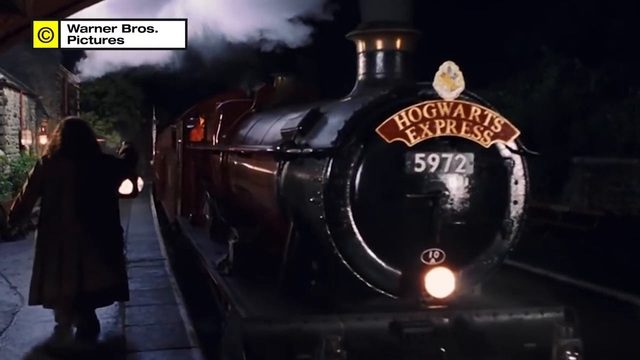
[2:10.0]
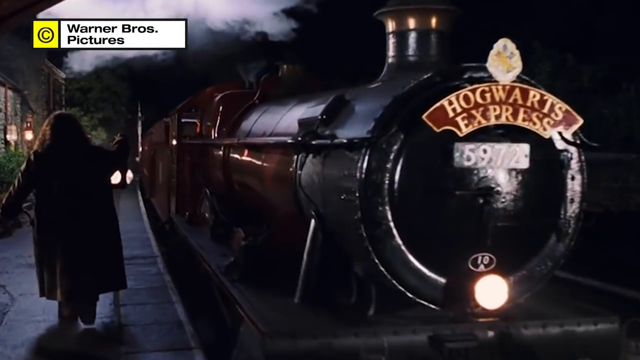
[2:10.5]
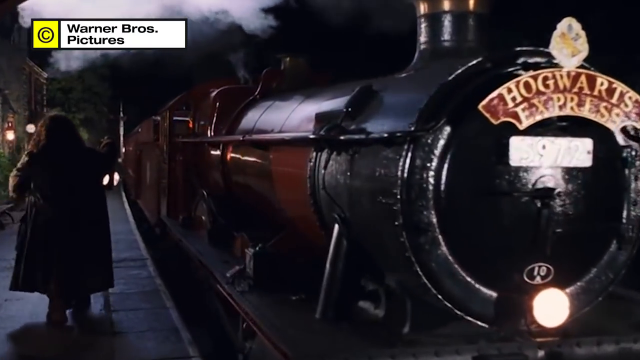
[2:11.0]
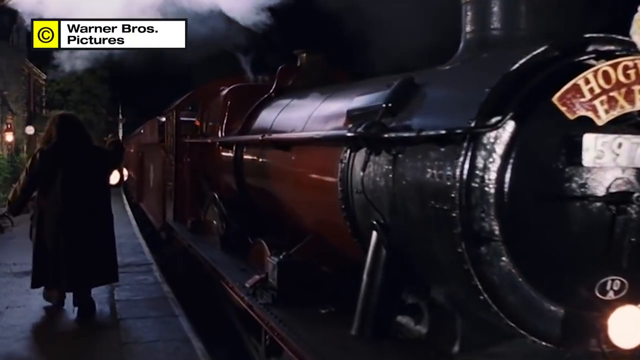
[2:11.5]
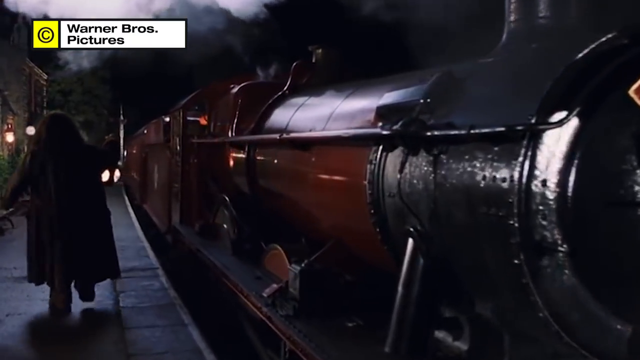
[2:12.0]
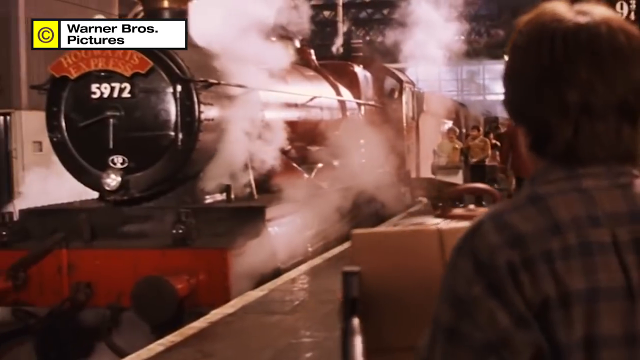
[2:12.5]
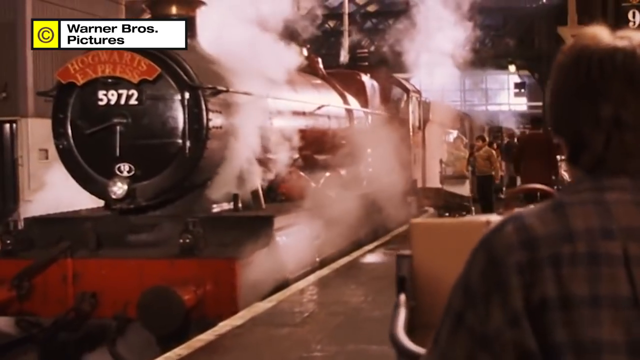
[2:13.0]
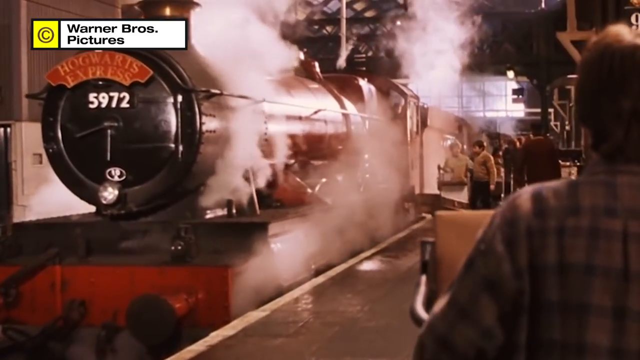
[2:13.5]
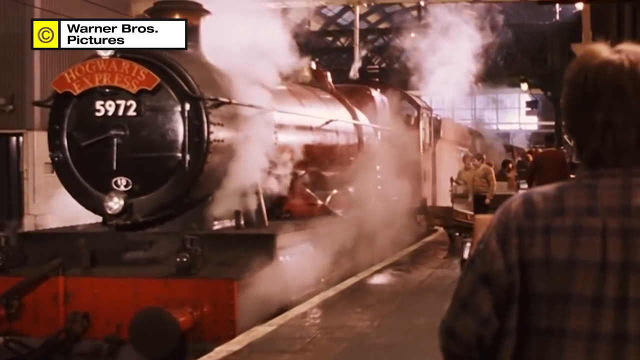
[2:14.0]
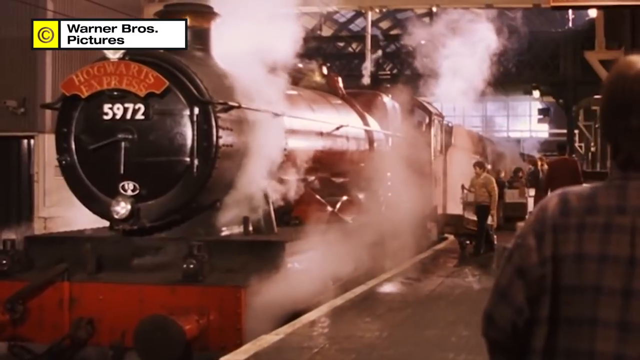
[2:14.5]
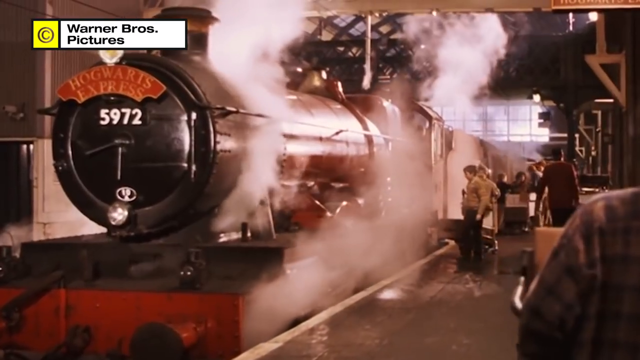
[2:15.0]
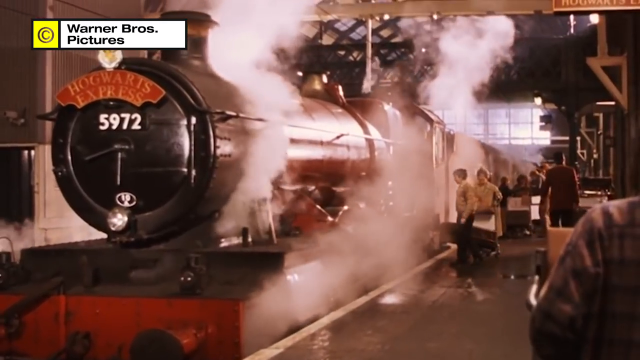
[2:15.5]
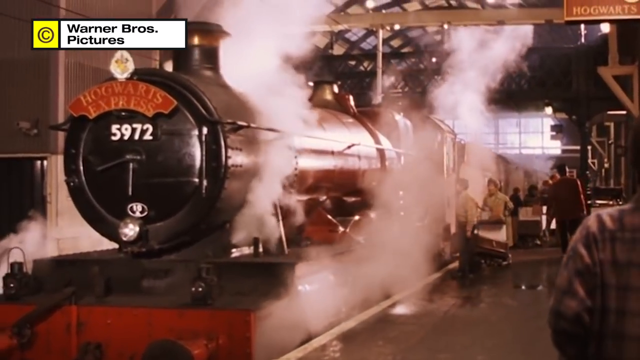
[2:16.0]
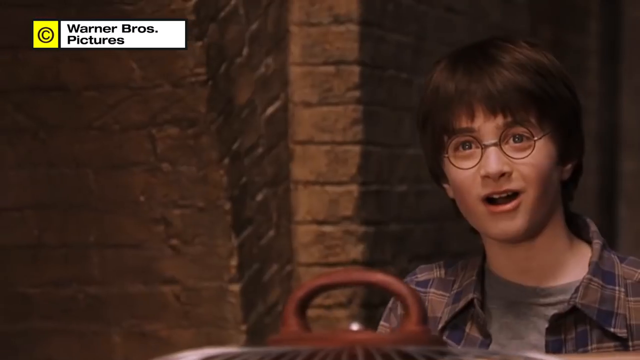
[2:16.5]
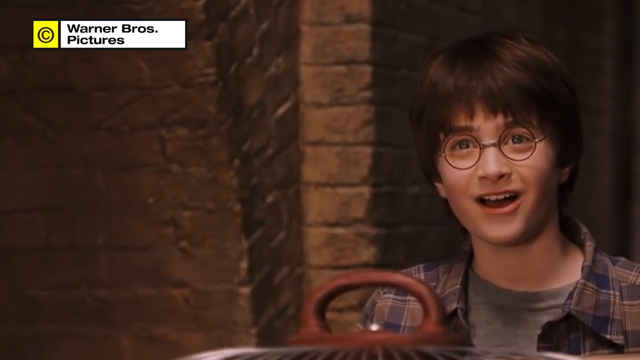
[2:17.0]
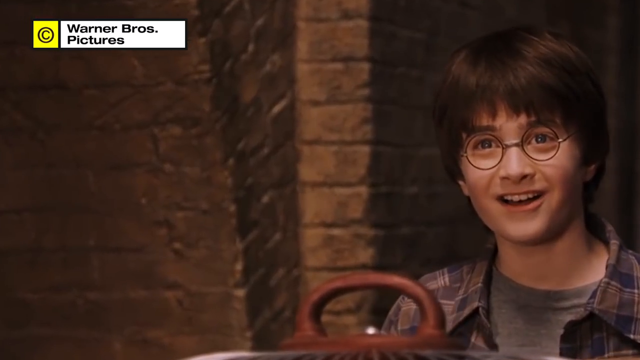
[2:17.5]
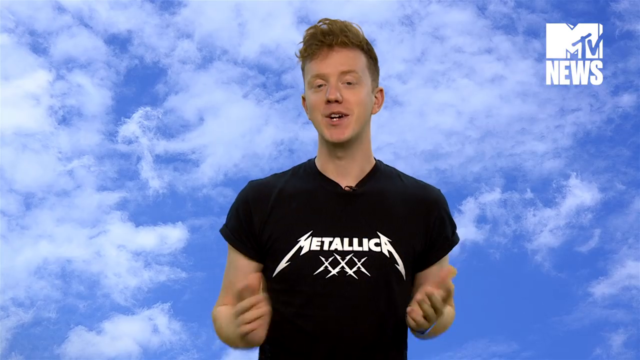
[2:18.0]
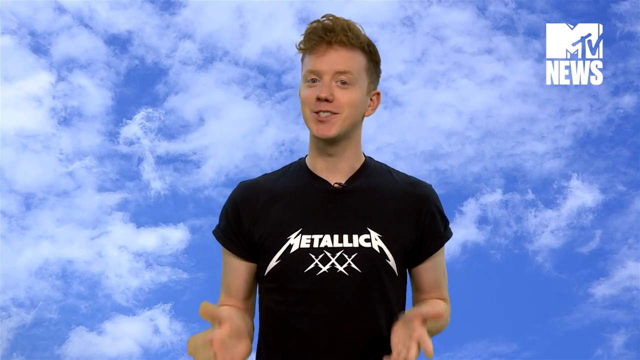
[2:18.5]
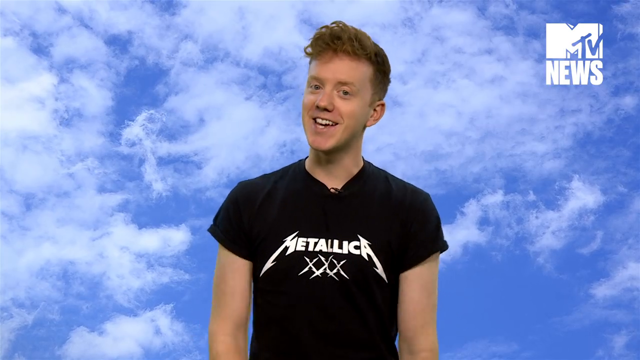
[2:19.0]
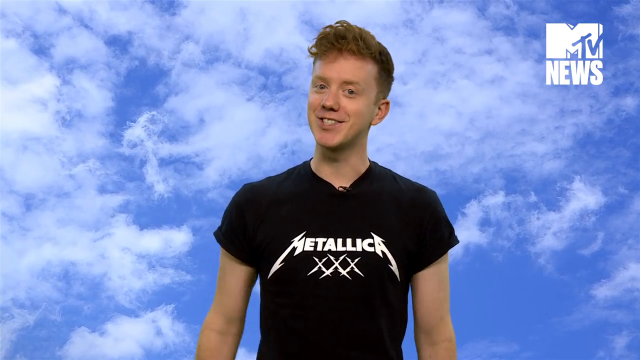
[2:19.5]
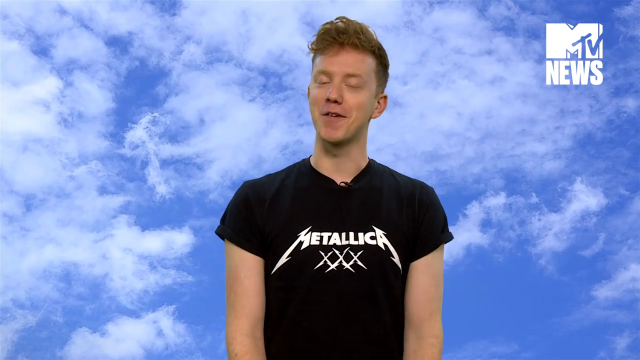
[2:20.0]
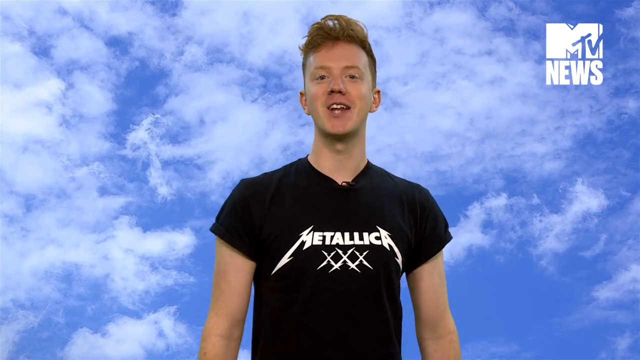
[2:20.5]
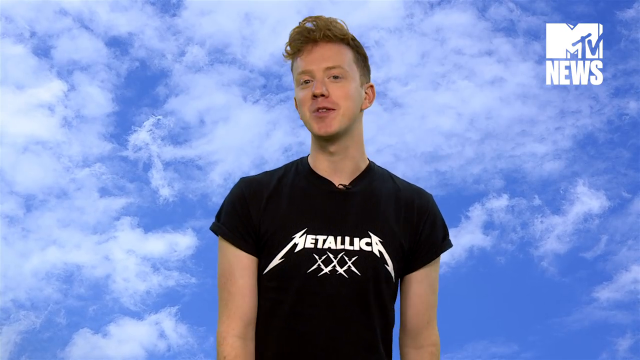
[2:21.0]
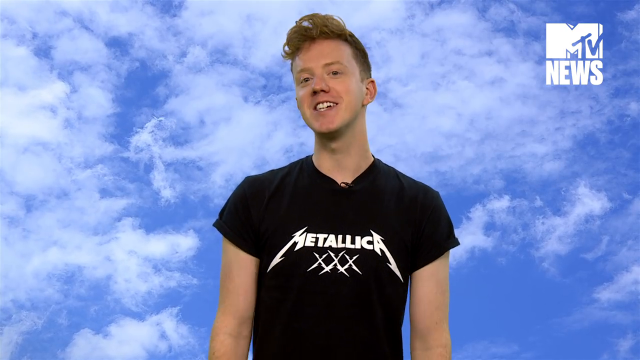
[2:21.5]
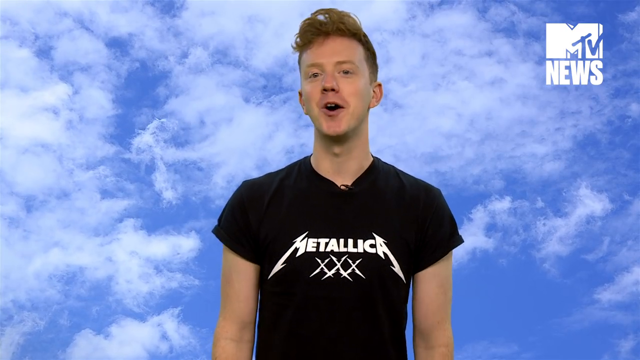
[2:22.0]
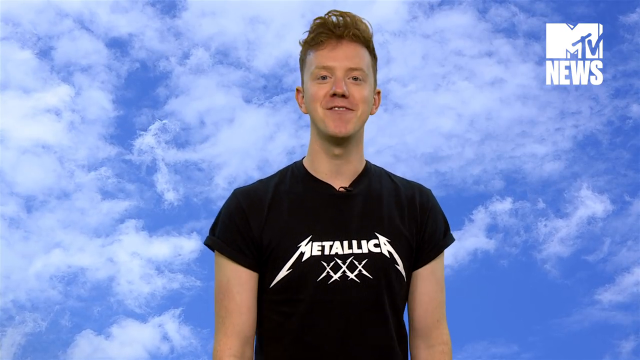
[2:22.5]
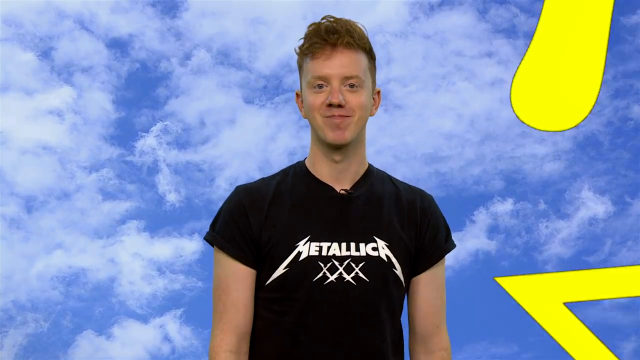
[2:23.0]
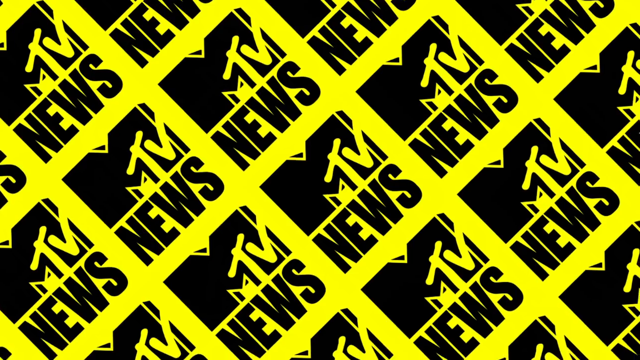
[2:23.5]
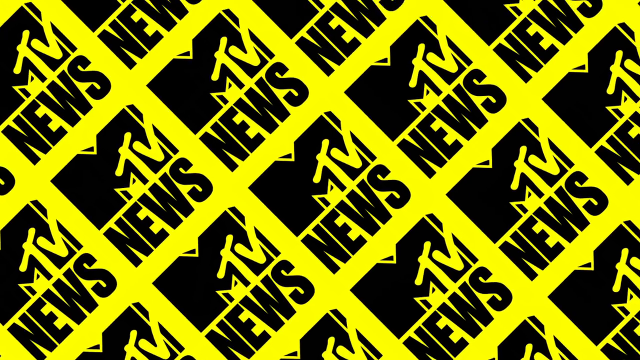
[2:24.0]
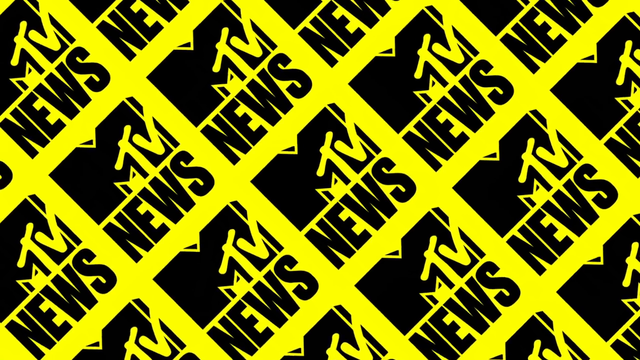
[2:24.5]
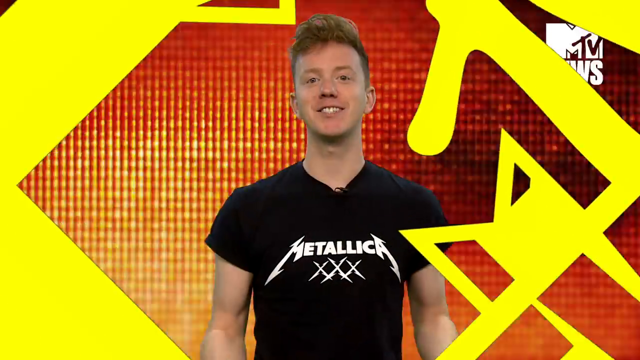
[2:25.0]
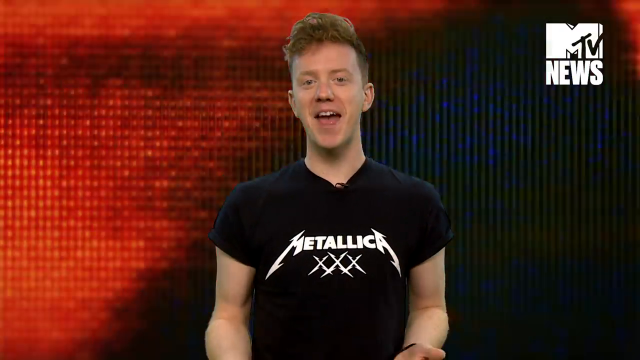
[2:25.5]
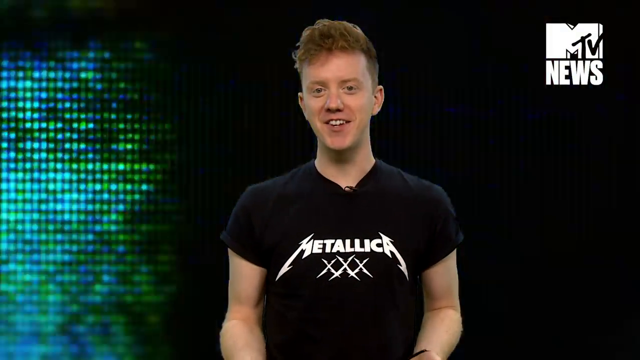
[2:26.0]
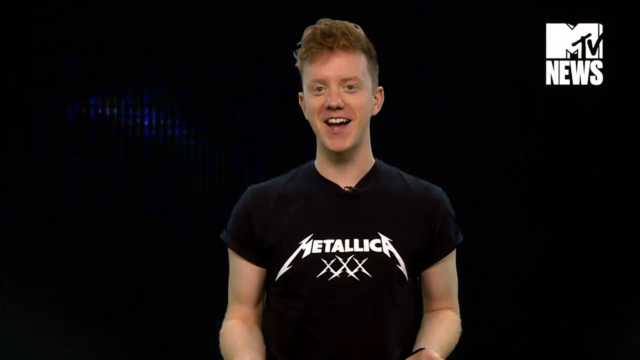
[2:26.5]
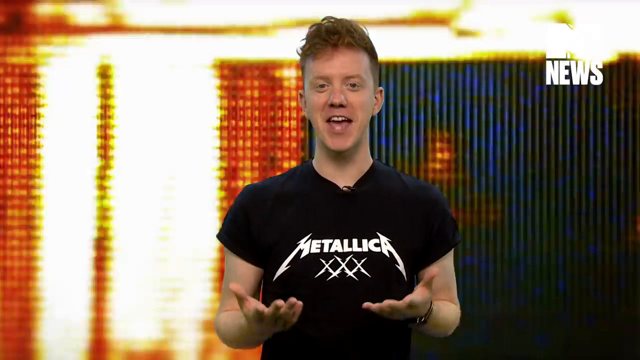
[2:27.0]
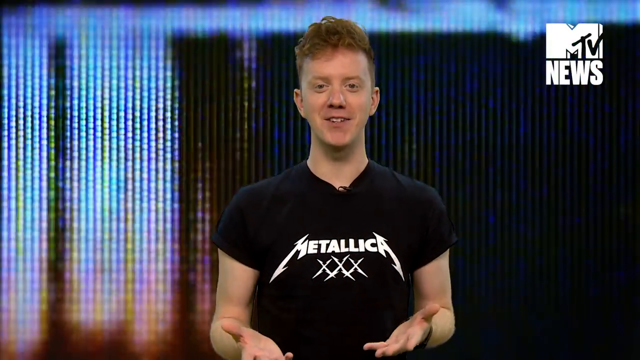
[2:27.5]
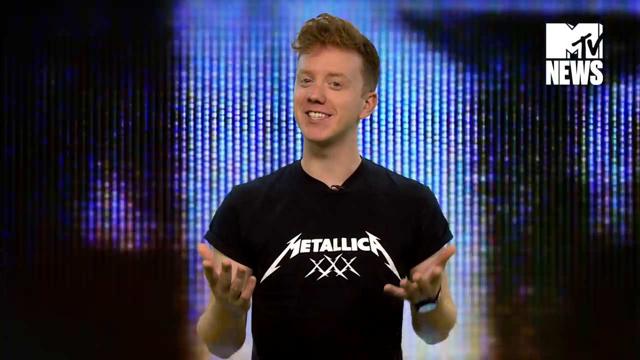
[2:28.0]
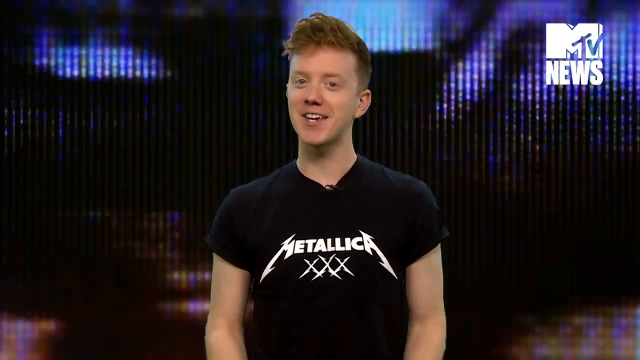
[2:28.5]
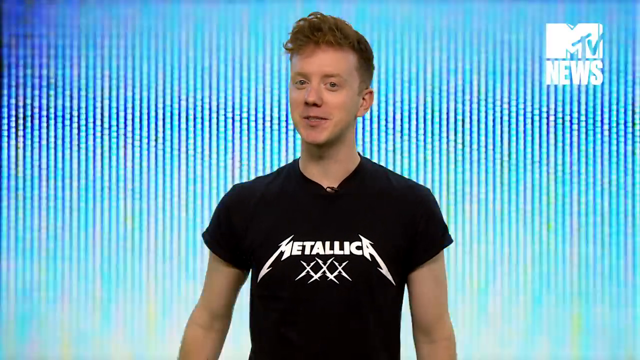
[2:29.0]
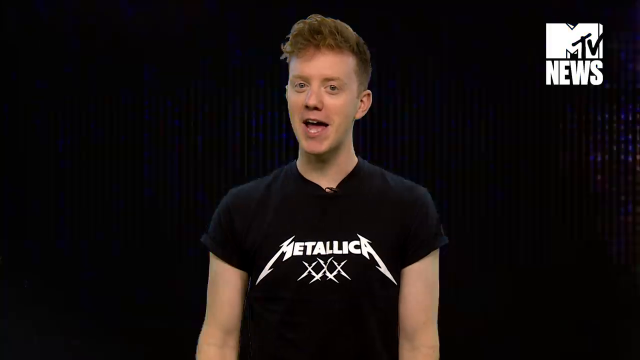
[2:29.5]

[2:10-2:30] The Hogwarts Express, kind of red, is shown with a kind of black background and Hagrid from the Harry Potter films walking next to it. Then the station is shown, with Harry kind of seeing the train for the first time. The video cuts back to the Caucasian man, 20 to 25, in the black shirt with kind of Metallica text and short reddish-brown hair, in front of a cloudy background, kind of talking. Some MTV News icons and transition screens follow before he appears again in front of a sort of flashy MTV News background.